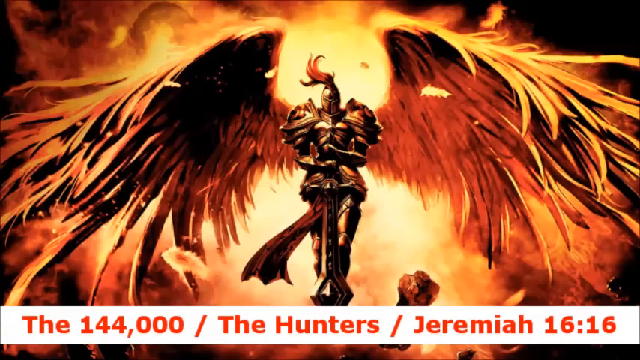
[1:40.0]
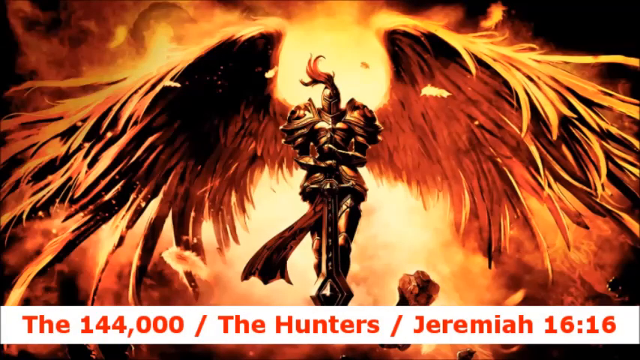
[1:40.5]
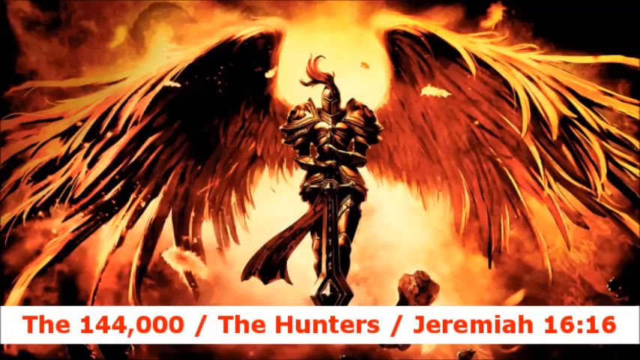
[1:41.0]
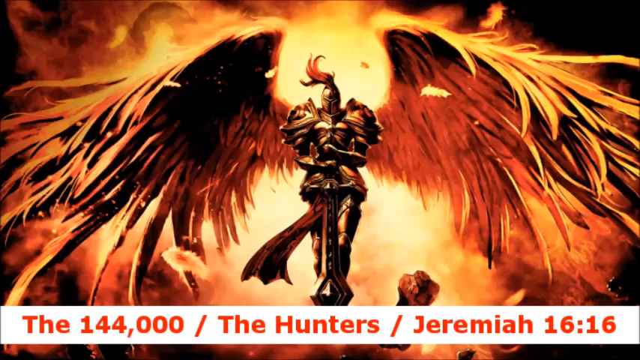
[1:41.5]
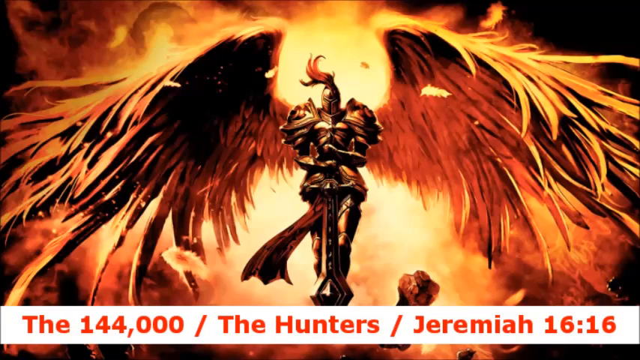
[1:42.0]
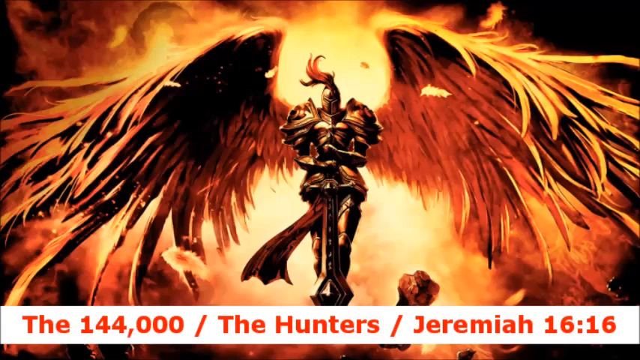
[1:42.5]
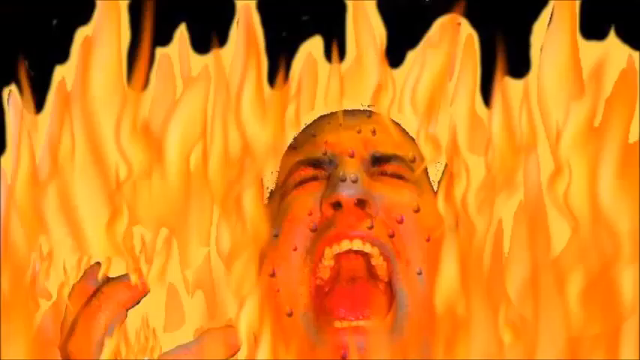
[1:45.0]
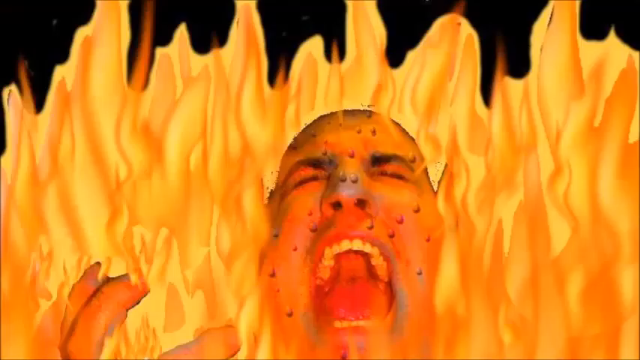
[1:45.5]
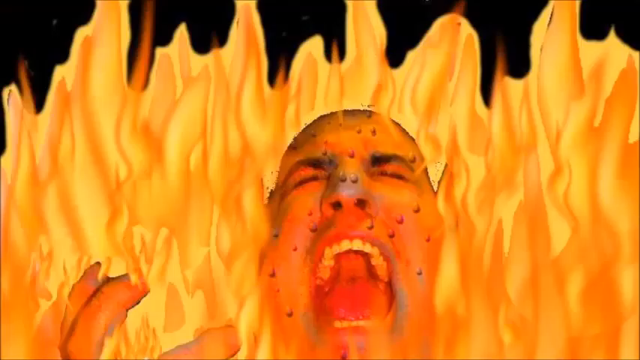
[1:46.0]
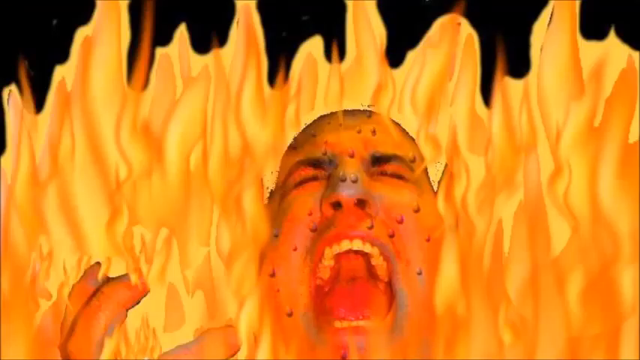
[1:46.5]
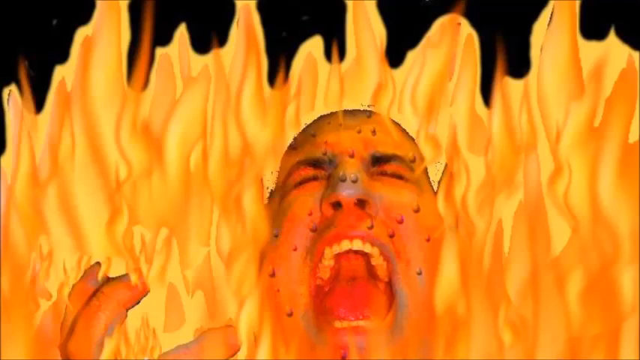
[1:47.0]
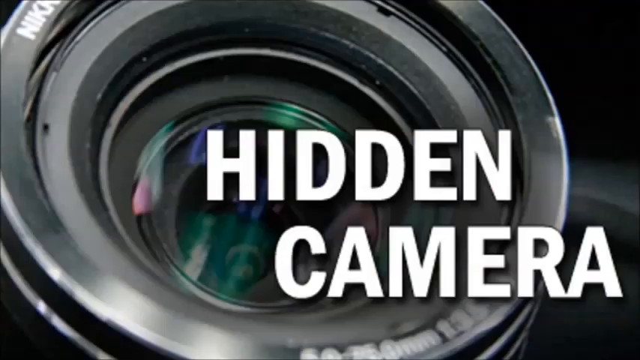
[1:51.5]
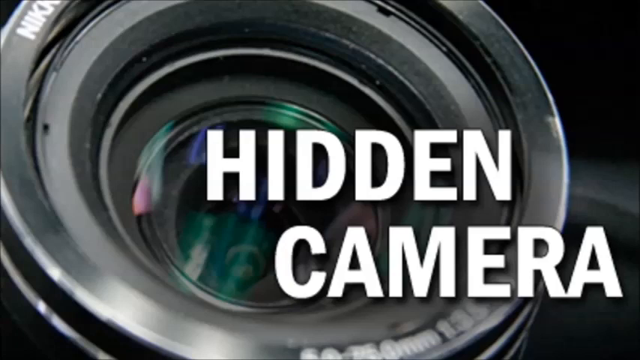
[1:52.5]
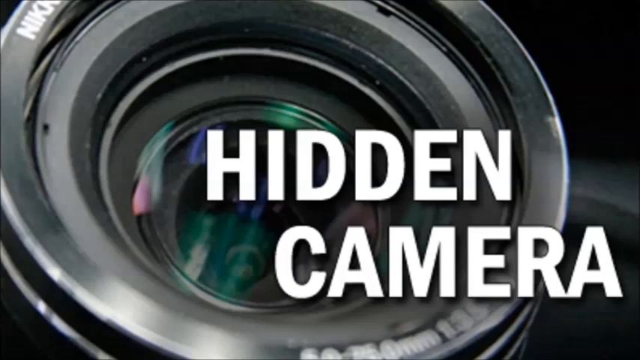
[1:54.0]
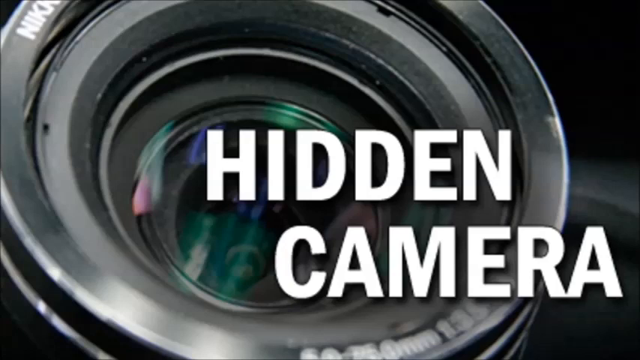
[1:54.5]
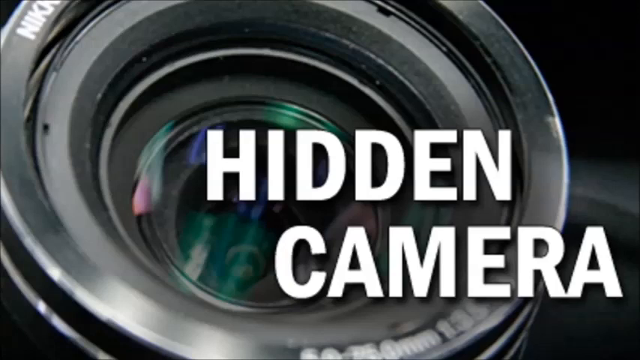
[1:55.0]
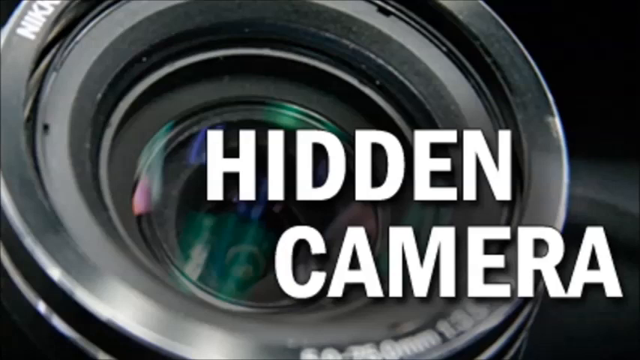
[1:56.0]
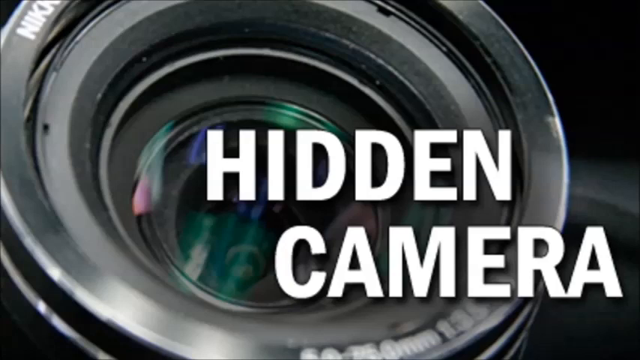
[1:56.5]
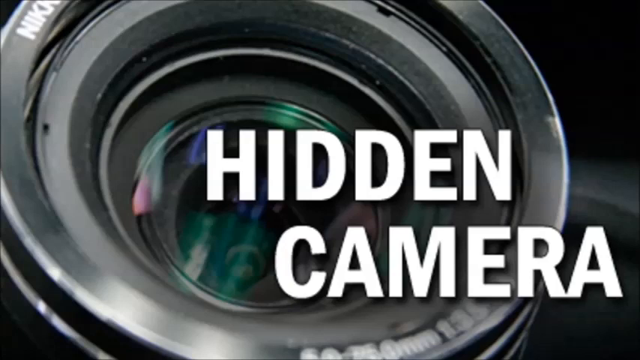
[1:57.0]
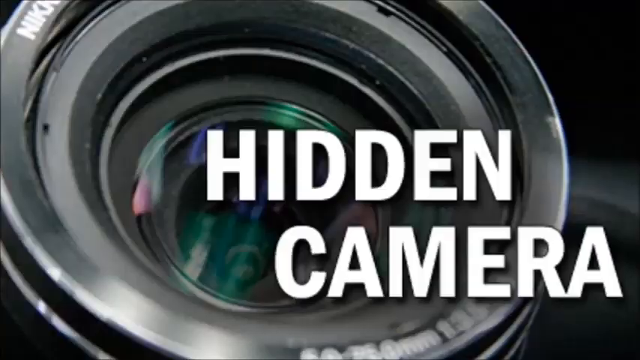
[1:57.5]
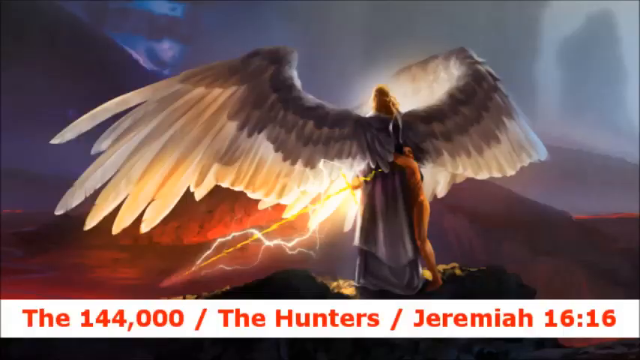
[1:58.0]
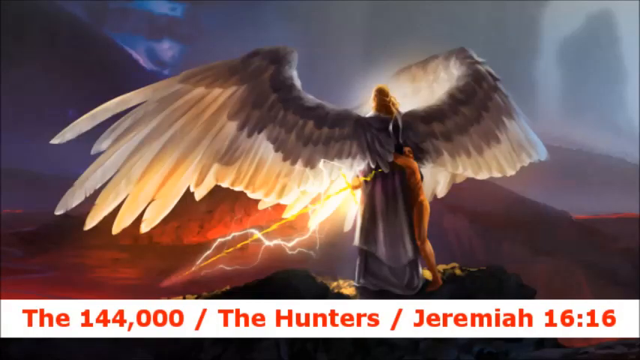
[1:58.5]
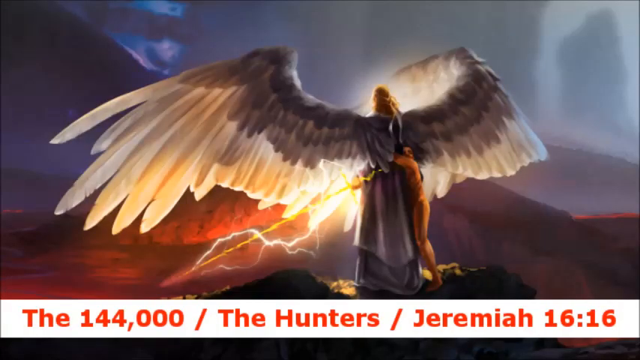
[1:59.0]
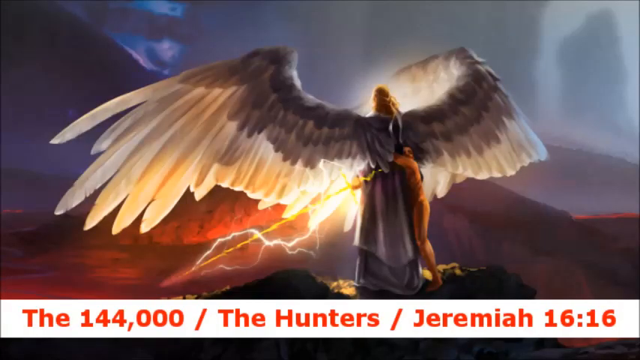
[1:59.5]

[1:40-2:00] An image shows a man with a pair of very large red and orange wings, with a rectangular white banner containing red text in the lower part of the screen. Next is an image of a man surrounded by flames, his mouth open and his eyes closed; a black background is visible in the upper part of the image. Another image follows in which the lens of a camera occupies most of the frame, with two rather large lines of white text in the lower right part. Then an image of a man with two large white wings on his back appears. A second figure, with skin of a very saturated color, embraces the winged man. In the background there are reliefs that look like mountains, and a white banner with red text is visible in the lower part of the image.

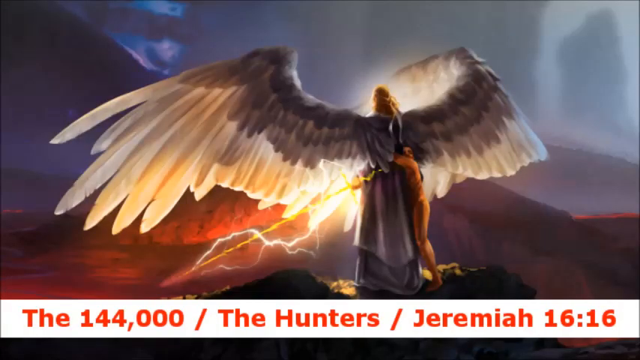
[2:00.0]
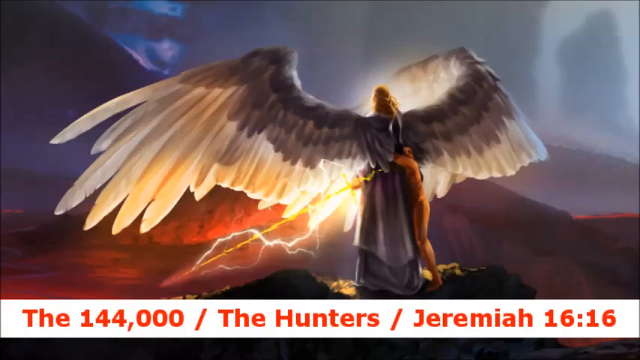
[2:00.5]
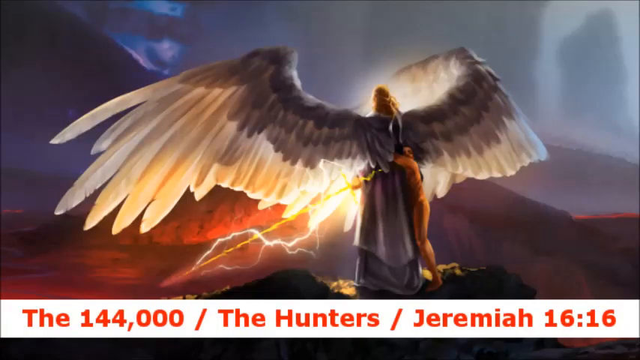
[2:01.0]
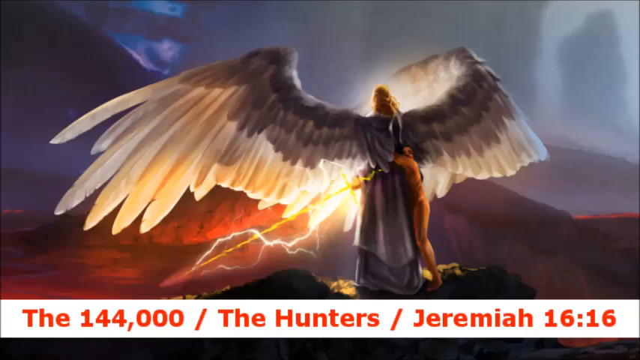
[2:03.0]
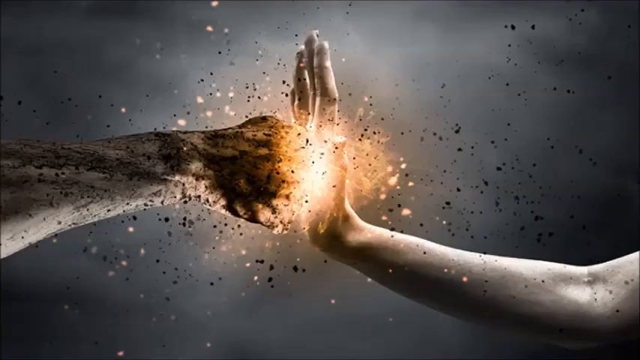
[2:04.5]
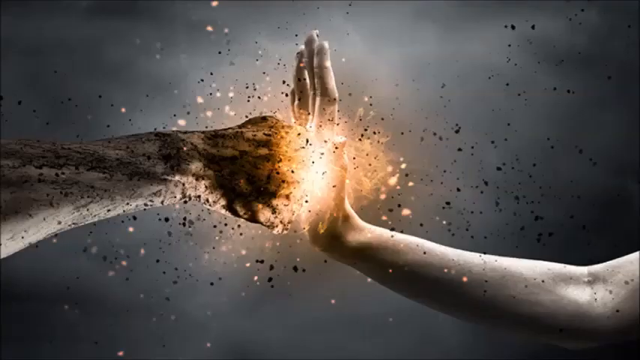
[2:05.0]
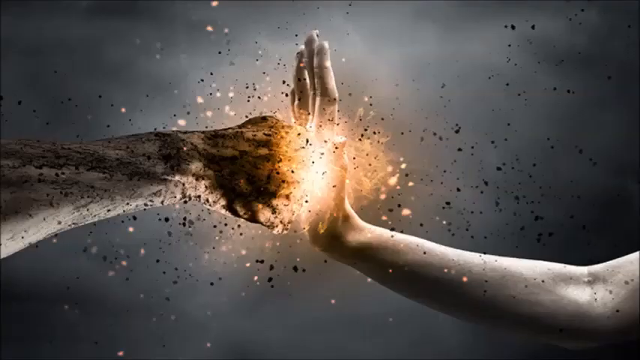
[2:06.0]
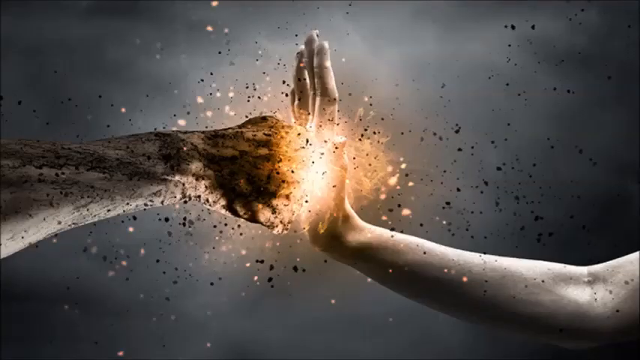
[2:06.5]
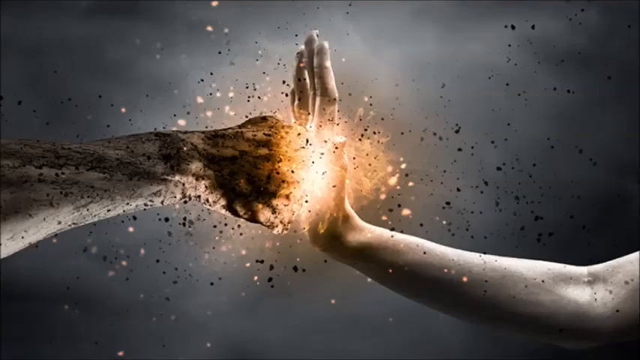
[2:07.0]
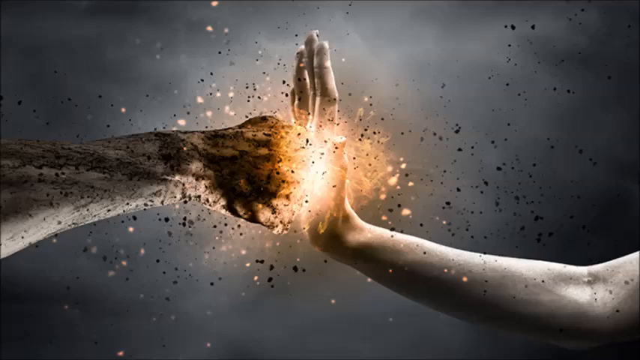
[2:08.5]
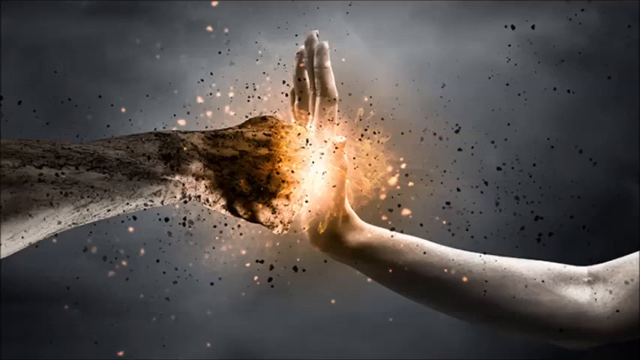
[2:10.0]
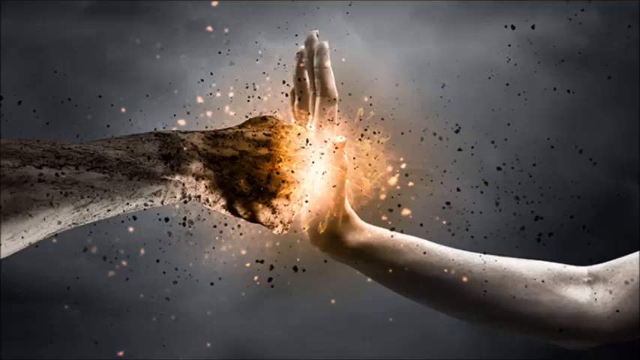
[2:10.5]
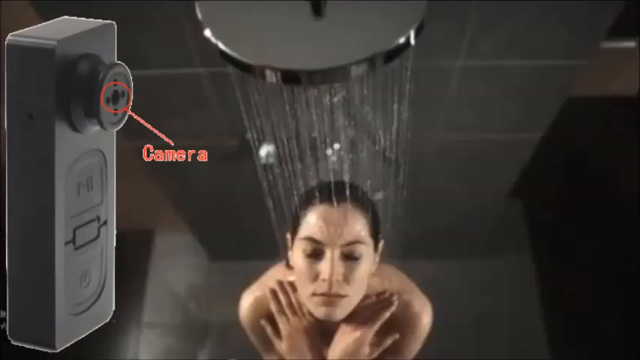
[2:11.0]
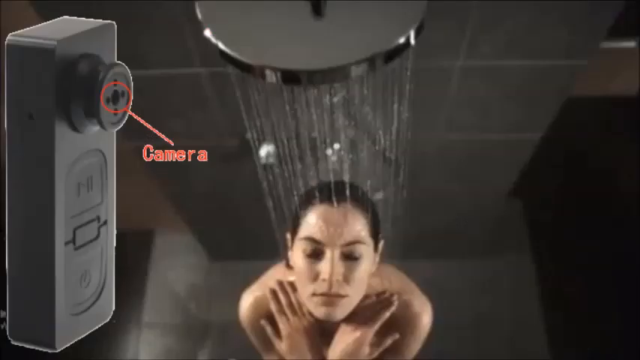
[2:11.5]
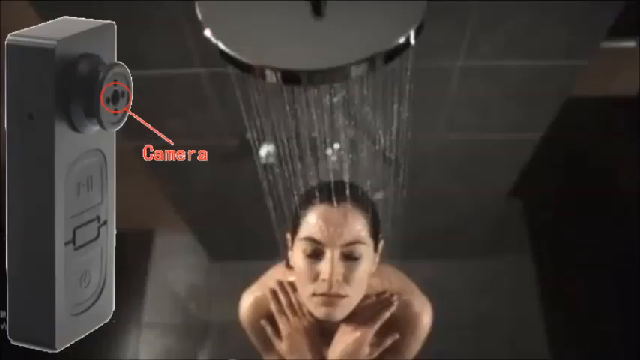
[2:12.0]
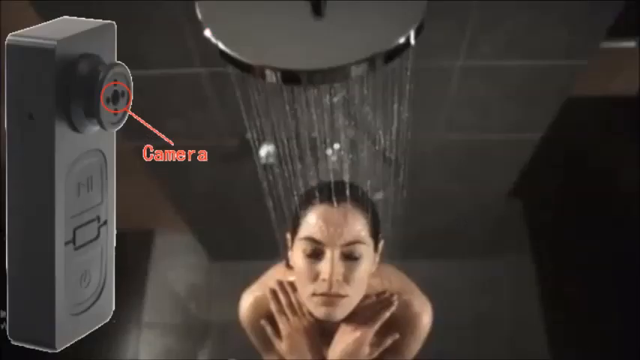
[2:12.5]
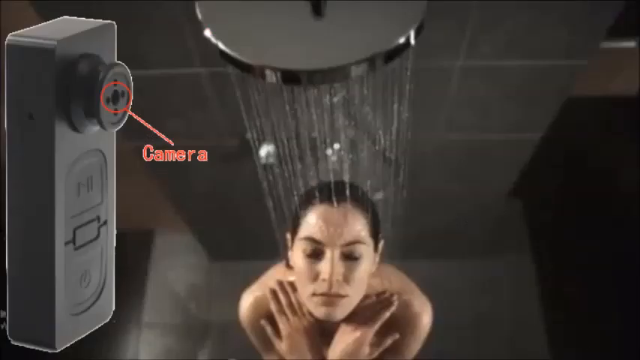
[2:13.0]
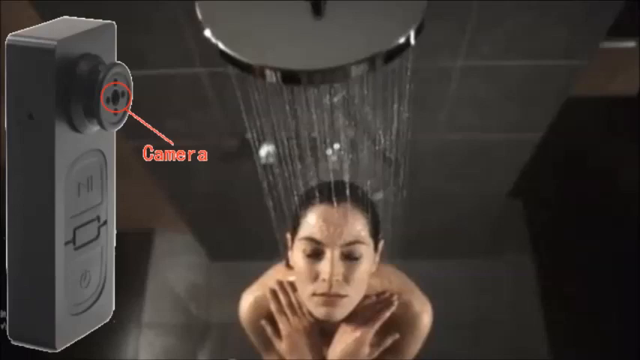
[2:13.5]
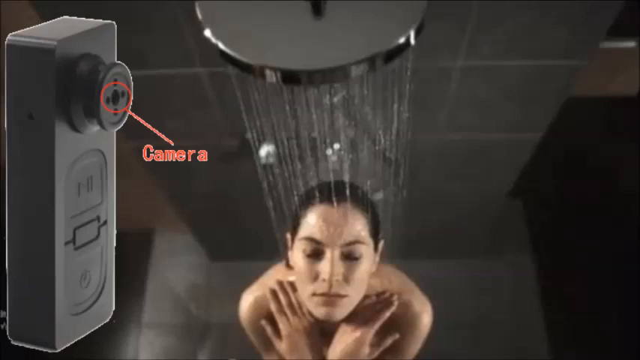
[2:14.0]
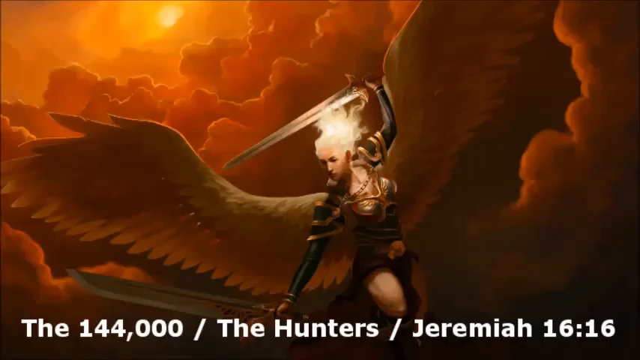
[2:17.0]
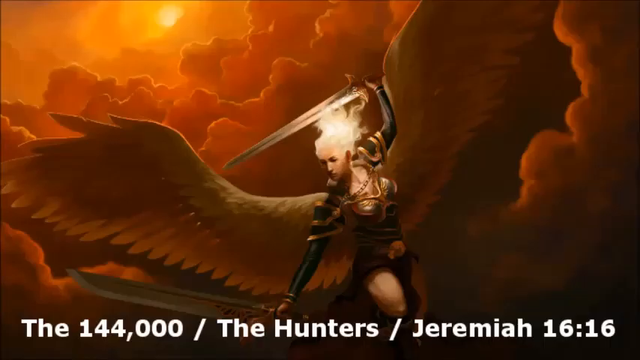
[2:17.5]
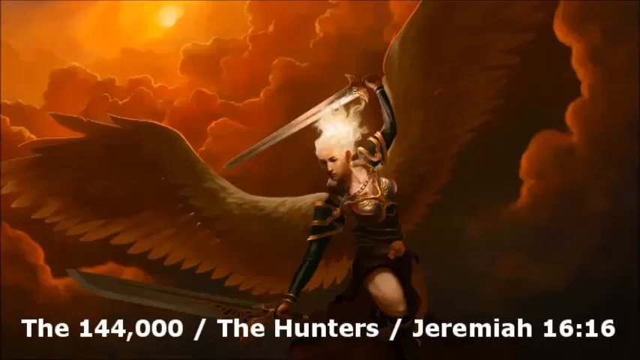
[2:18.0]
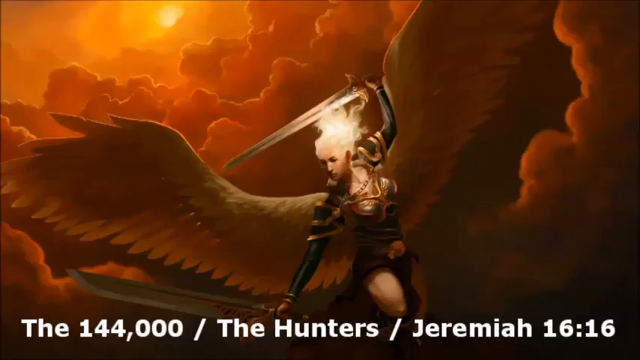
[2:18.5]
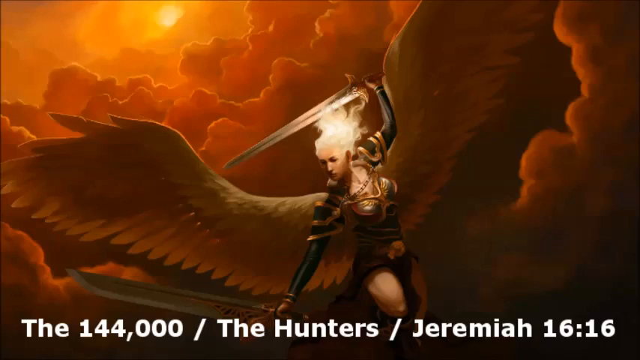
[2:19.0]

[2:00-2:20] An image shows an angel, a winged man, who seems to be wielding a weapon, probably a yellow sword, while a second figure embraces him from behind. At the bottom is a white banner with red text inside. Next, an image of two arms joining appears: on the left a fist impacts an open hand, and at the point of impact there is a very light-colored luminous halo. Then comes an image taken from above of a woman in the shower, with water droplets starting from the upper part of the frame and sliding down her body. On the left is an image of a device with red text connected by a rather short red segment to the upper part of the object. After that, an image of a person with wings and a sword in the left hand appears.